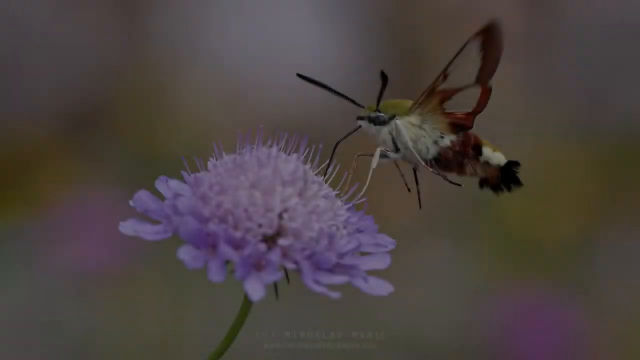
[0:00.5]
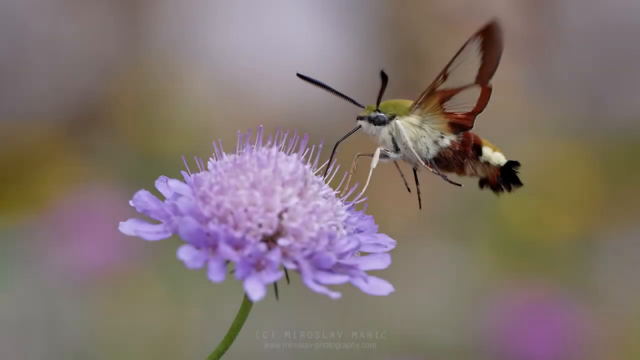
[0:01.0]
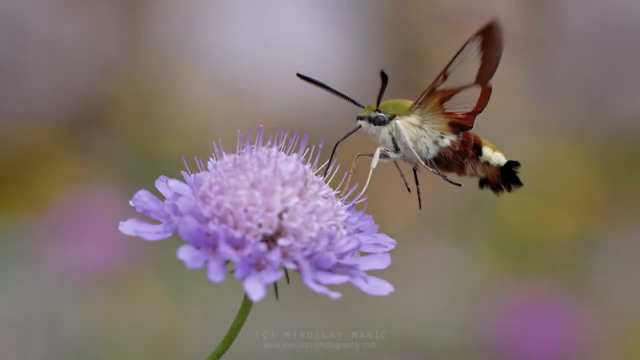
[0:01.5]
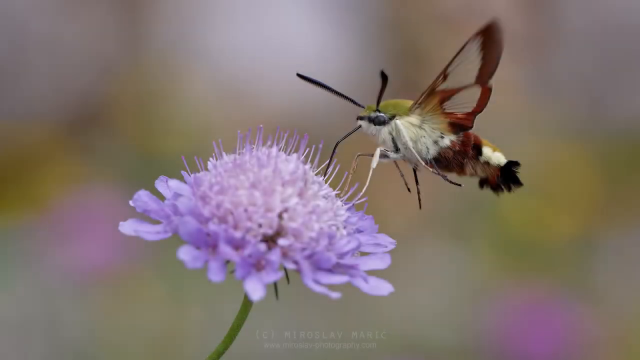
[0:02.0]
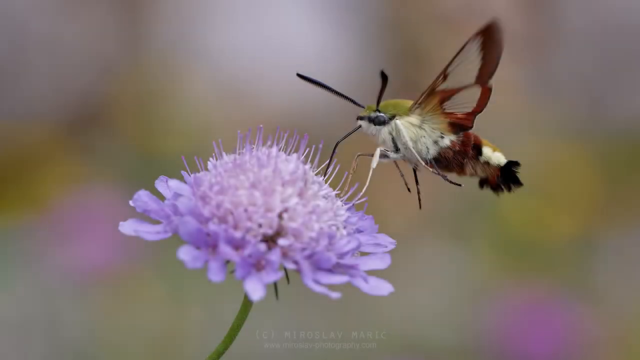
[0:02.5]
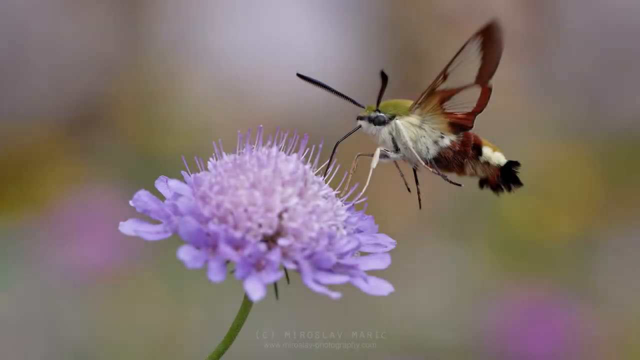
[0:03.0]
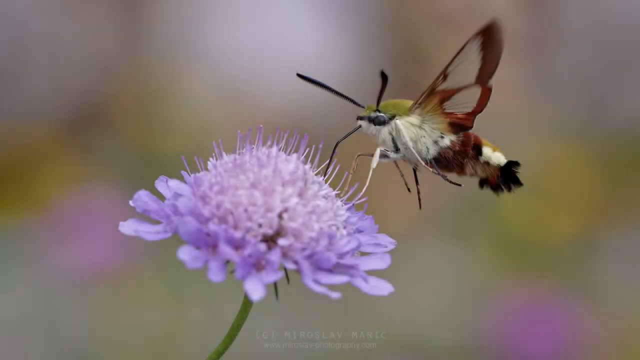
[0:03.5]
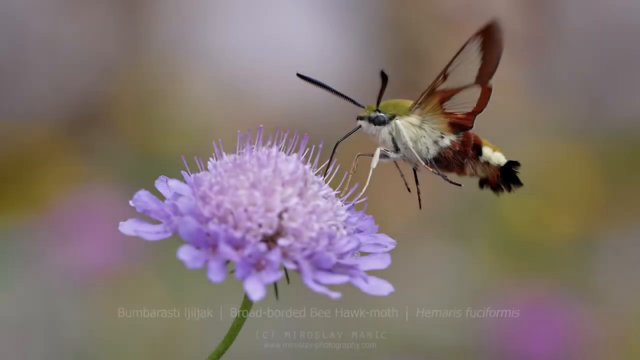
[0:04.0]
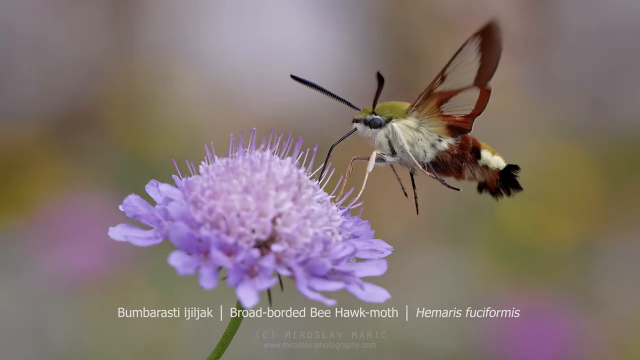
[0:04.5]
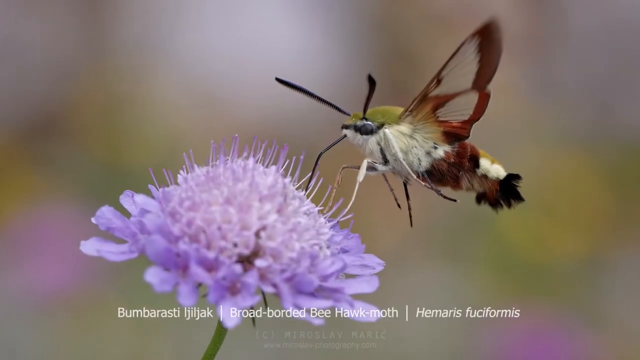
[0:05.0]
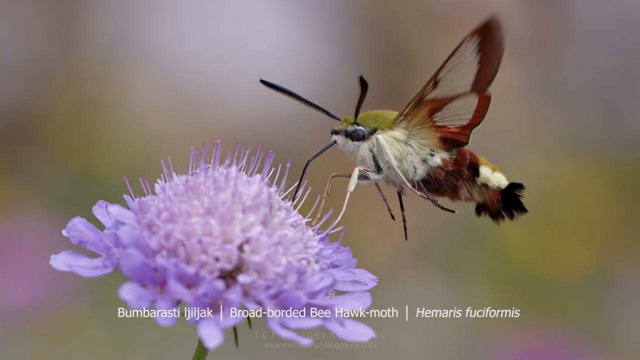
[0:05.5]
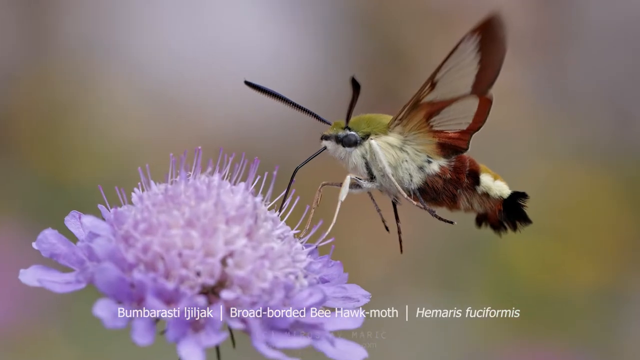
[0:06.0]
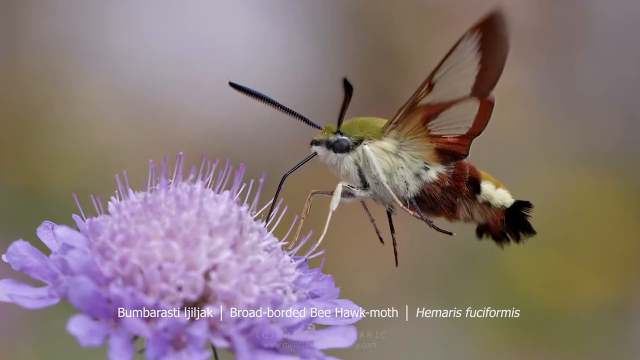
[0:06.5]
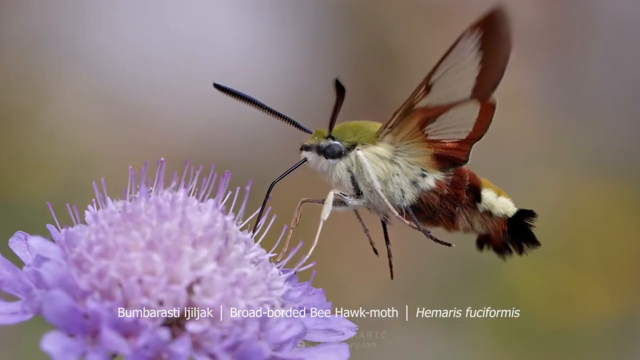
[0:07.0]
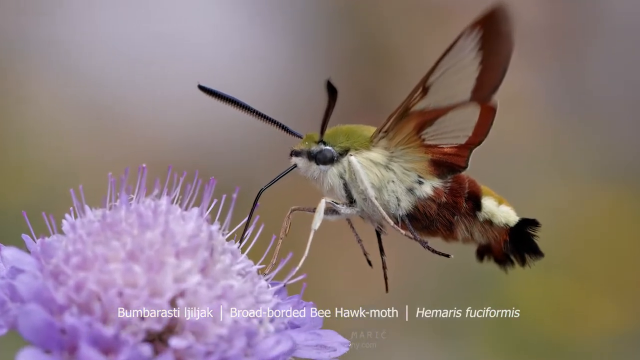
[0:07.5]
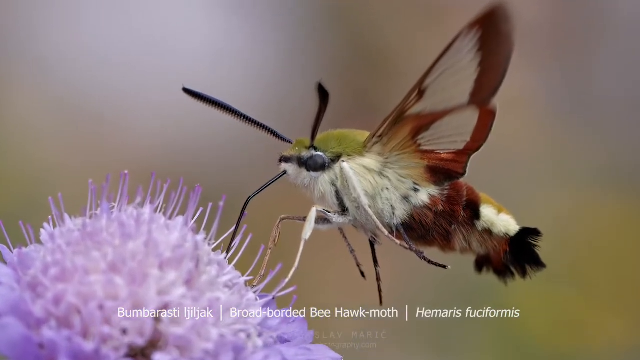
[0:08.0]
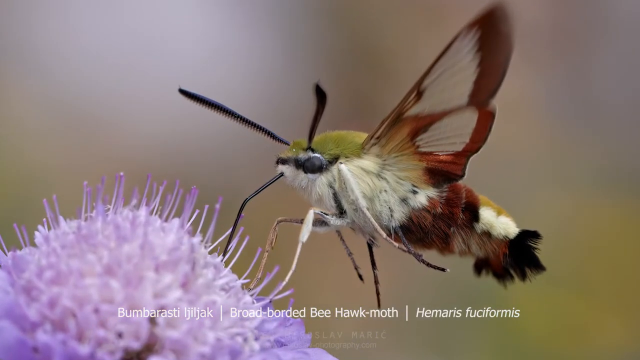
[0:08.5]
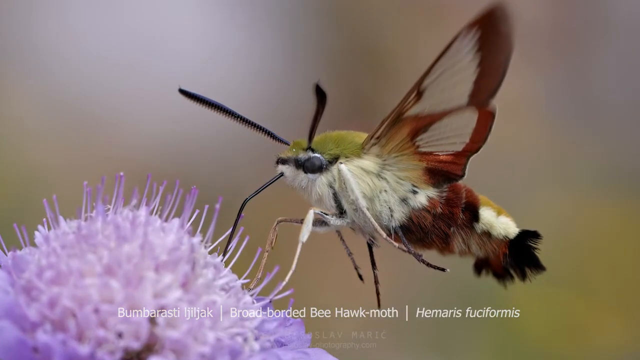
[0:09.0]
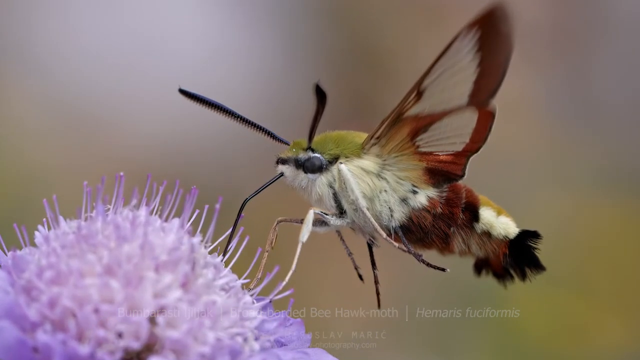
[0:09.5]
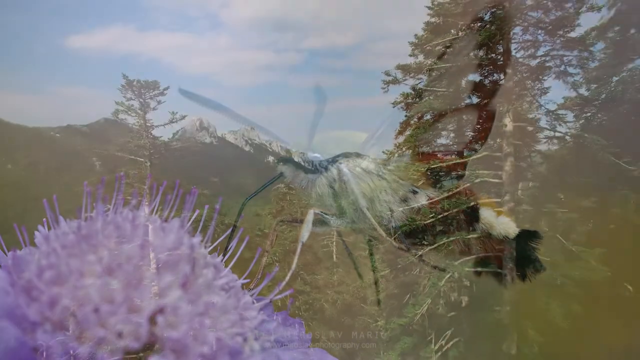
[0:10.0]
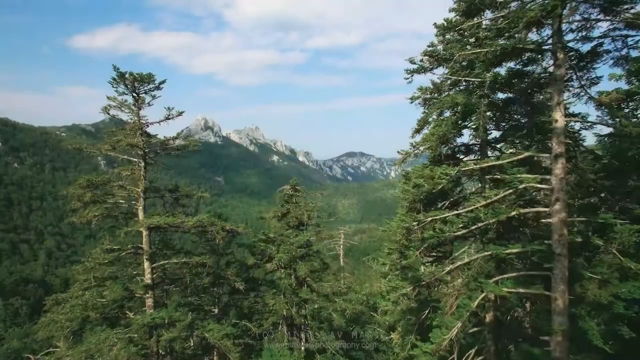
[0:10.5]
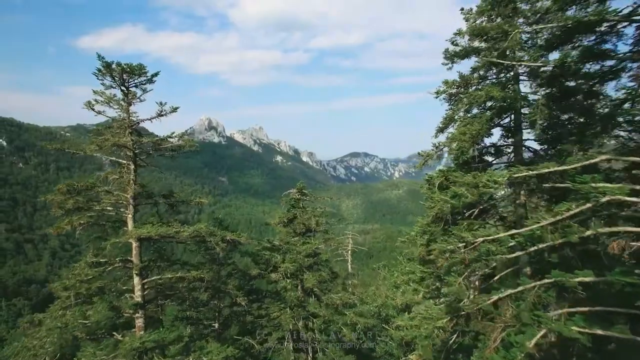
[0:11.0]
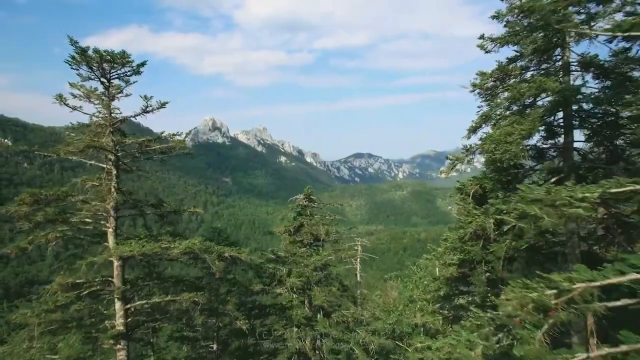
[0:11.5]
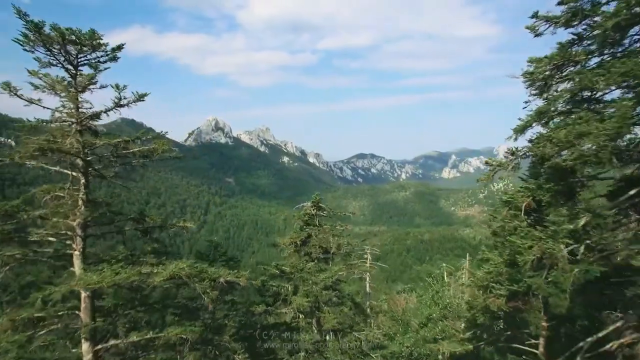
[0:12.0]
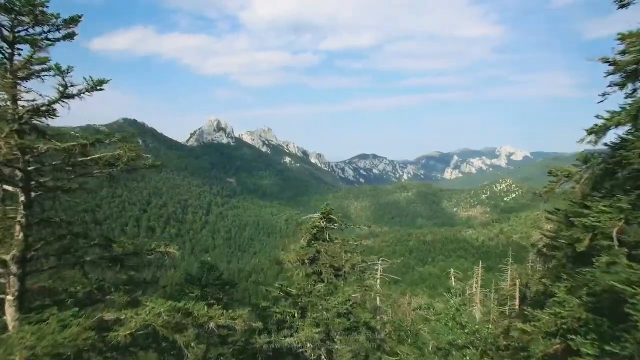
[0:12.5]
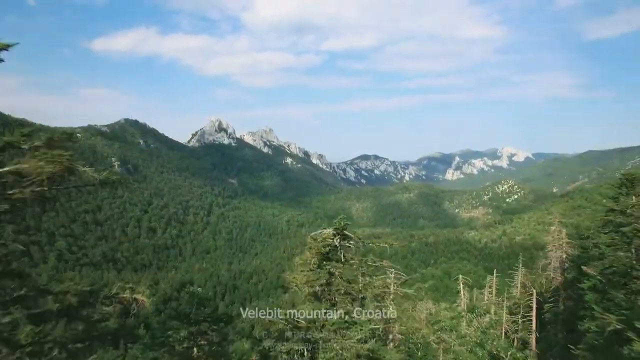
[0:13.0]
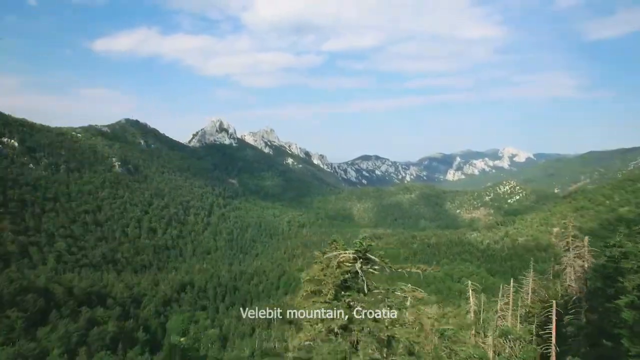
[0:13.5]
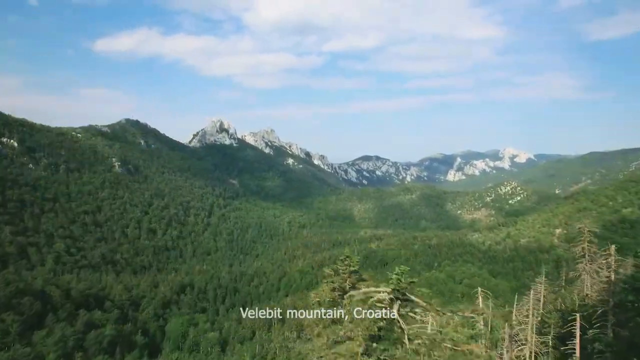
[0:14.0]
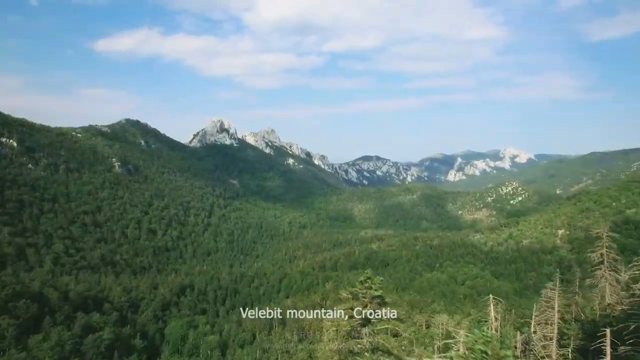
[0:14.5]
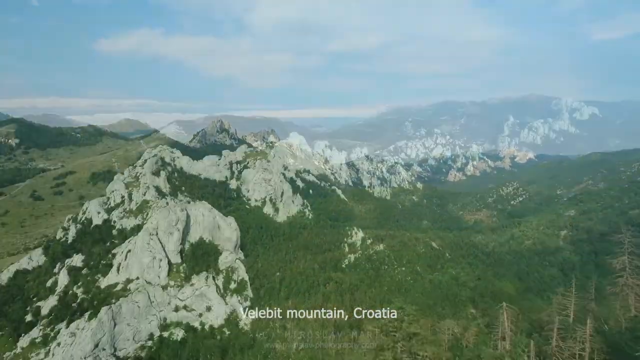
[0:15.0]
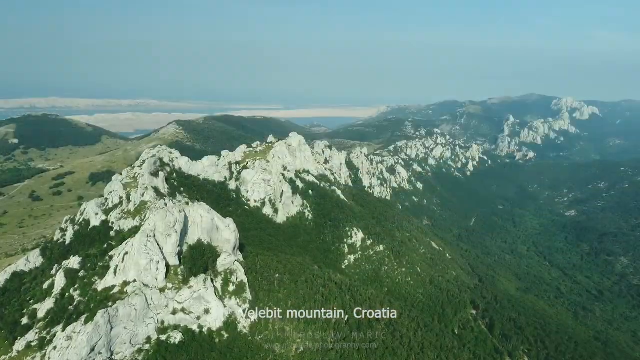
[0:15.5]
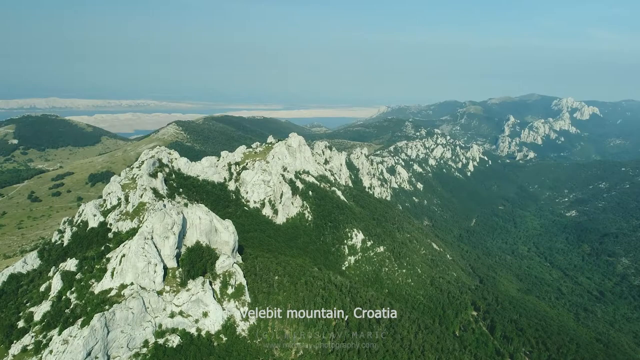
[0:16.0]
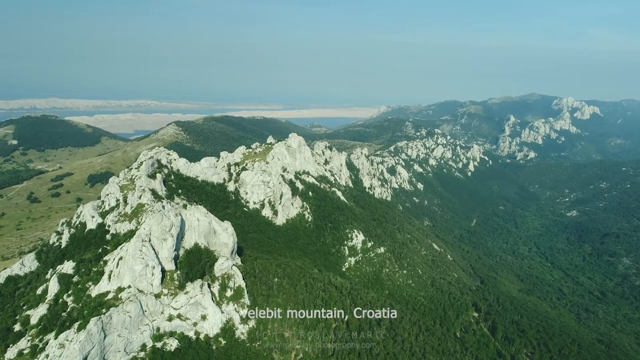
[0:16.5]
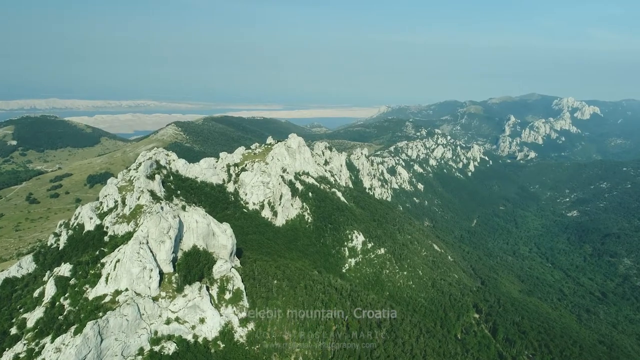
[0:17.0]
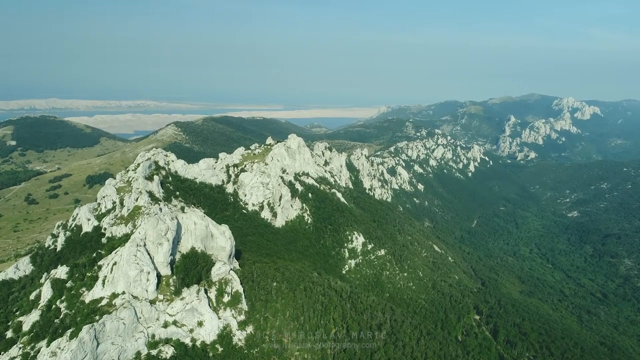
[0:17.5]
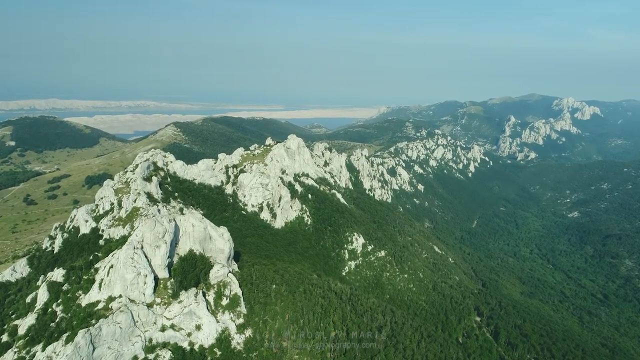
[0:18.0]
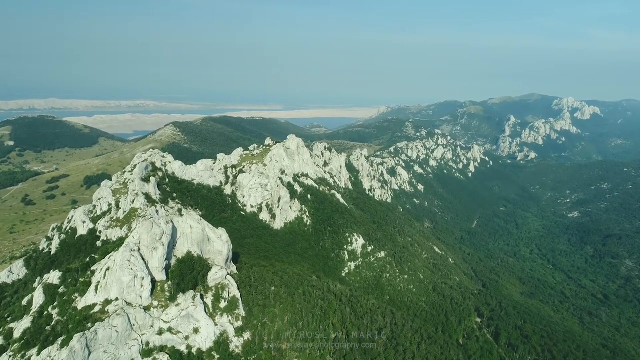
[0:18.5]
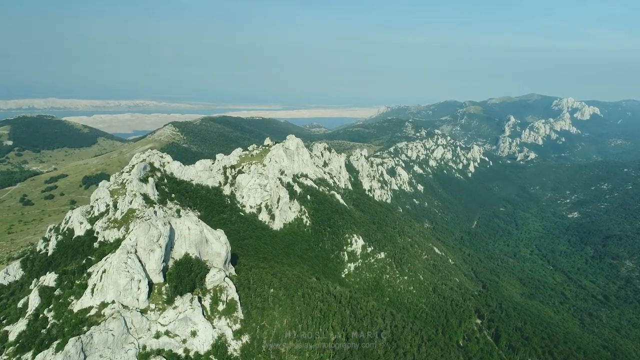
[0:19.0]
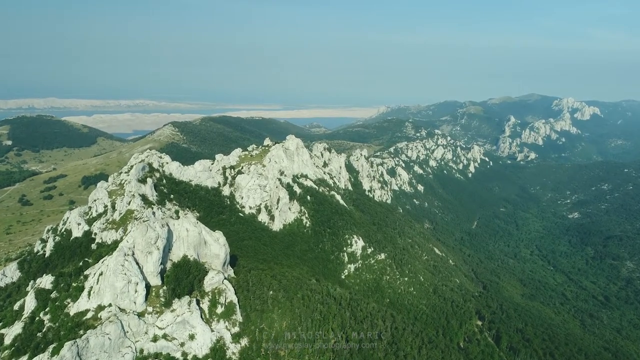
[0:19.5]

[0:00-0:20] A violet flower has some kind of insect on top of it that looks like it is collecting nectar; a weird-looking, narrow black stick-like part comes out of the insect and points toward the flower. The video cuts to a mountain range covered in grass, and in the far background the tops of the mountains look kind of gray; rather than snow, they are stones on top of the mountain. It then seems to cut back to the insect, which seems to be collecting nectar; it has brown wings that are also kind of see-through. The video cuts back to the mountain range, with some trees in the foreground.